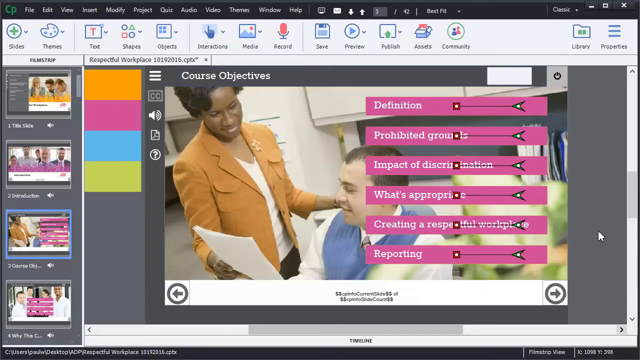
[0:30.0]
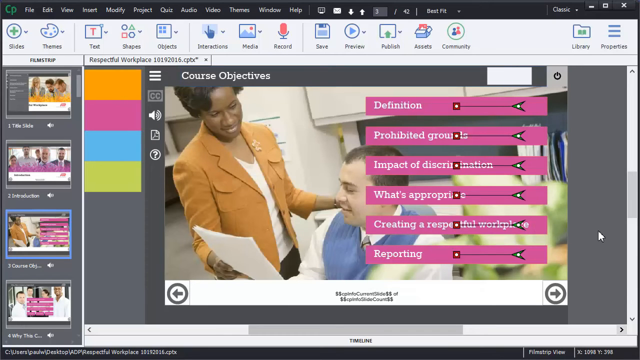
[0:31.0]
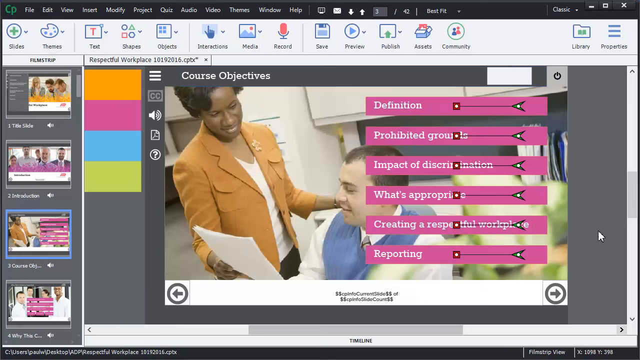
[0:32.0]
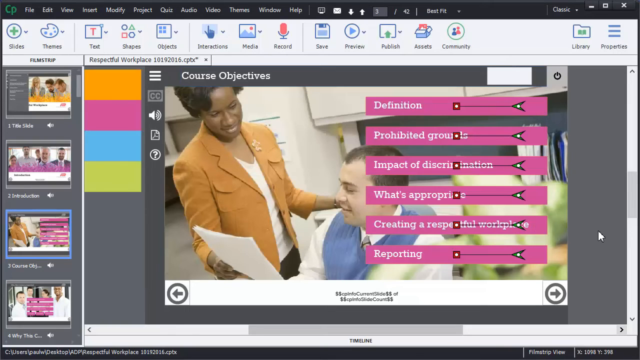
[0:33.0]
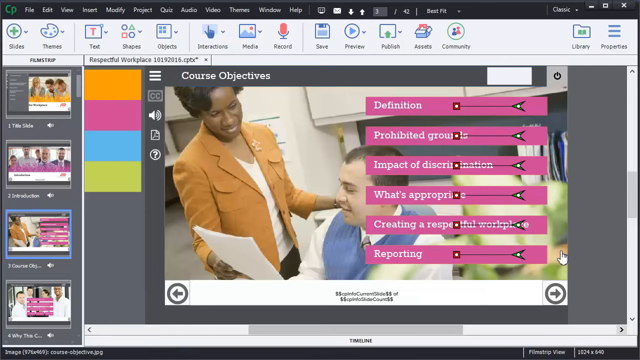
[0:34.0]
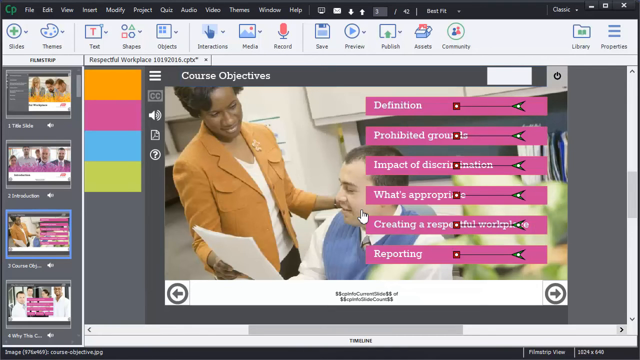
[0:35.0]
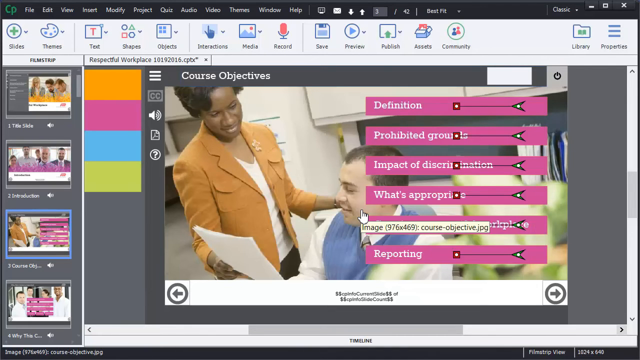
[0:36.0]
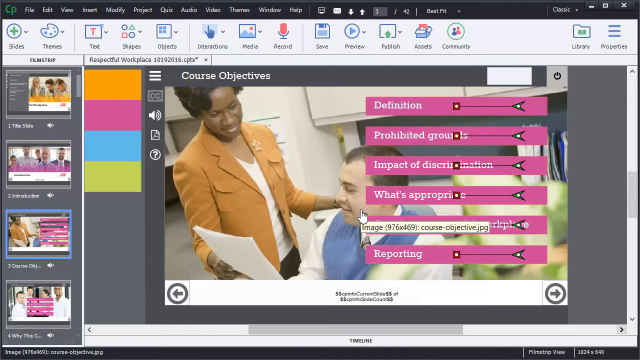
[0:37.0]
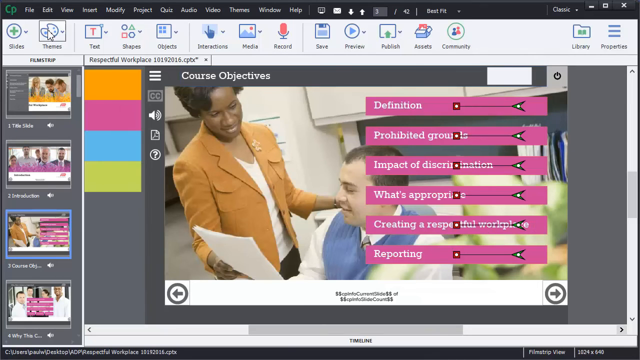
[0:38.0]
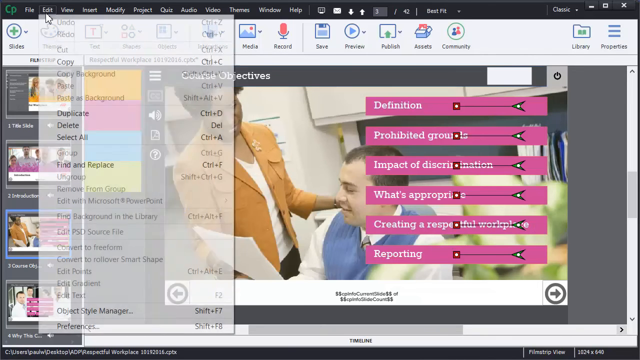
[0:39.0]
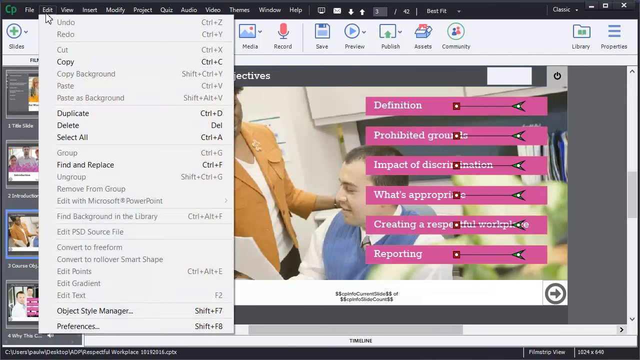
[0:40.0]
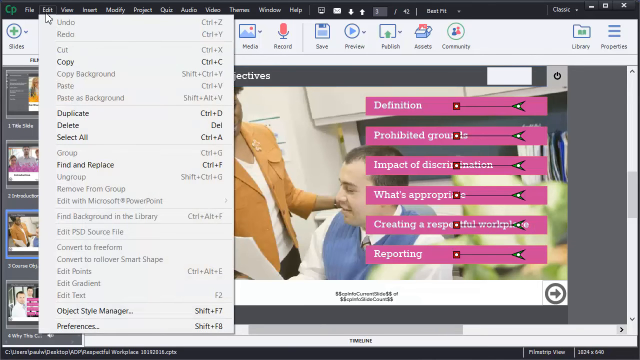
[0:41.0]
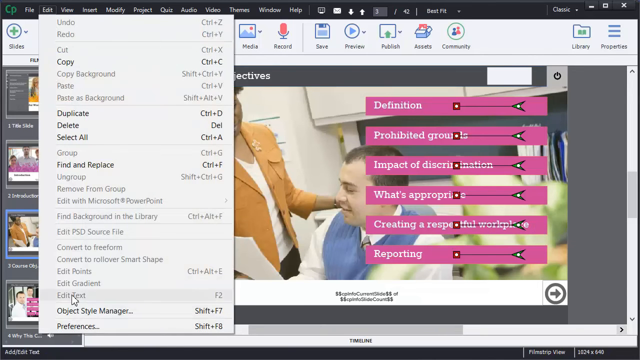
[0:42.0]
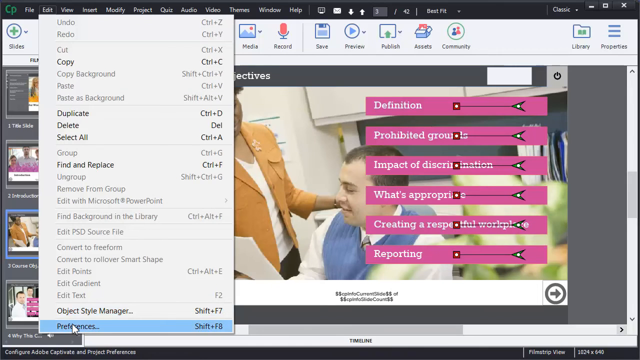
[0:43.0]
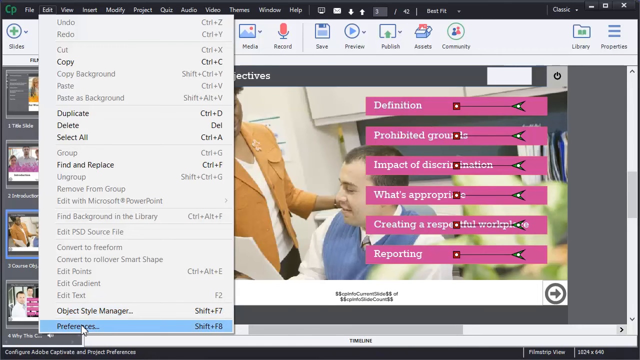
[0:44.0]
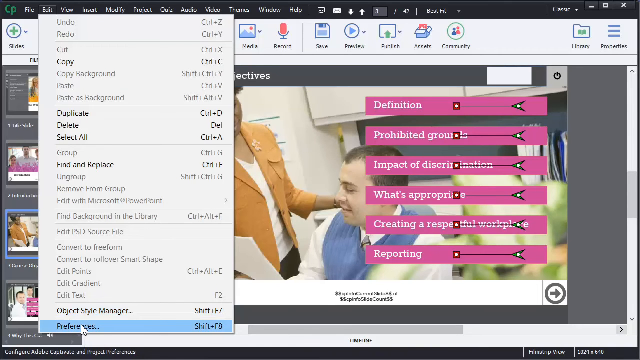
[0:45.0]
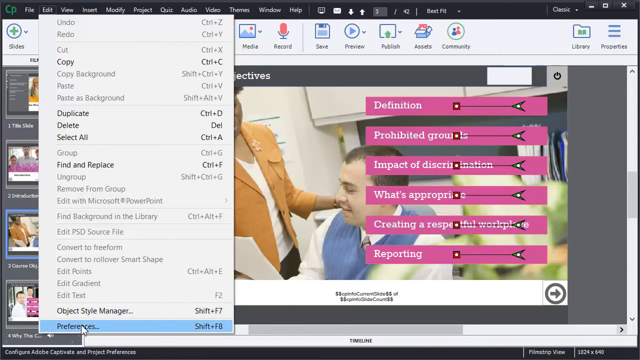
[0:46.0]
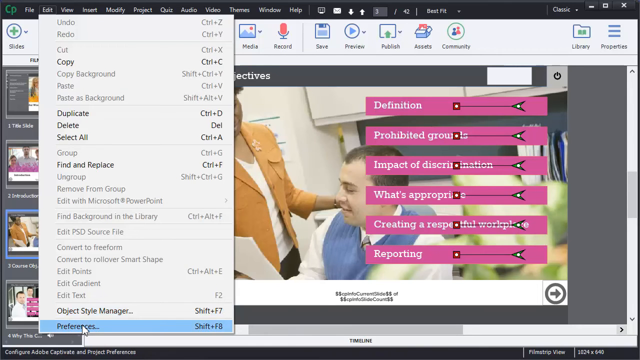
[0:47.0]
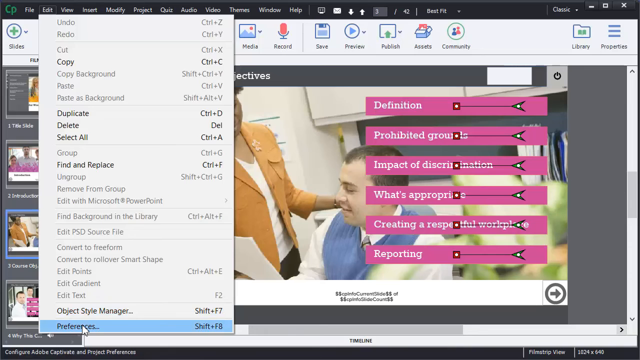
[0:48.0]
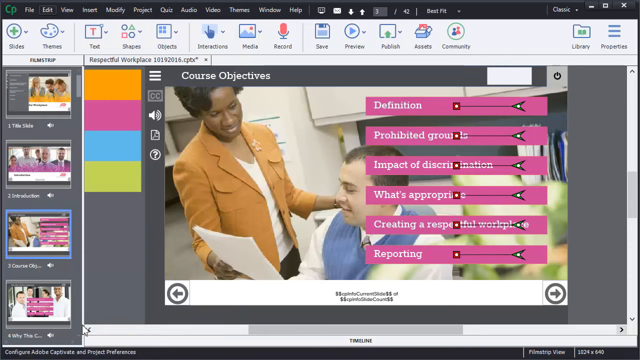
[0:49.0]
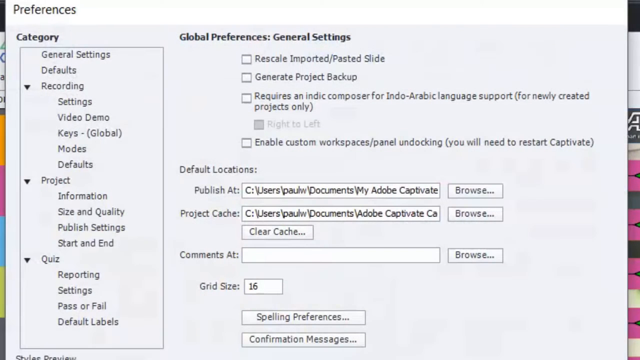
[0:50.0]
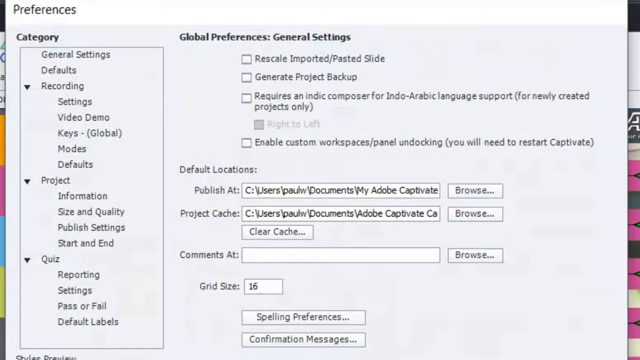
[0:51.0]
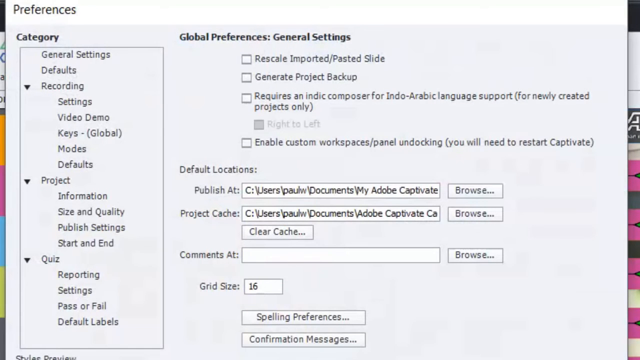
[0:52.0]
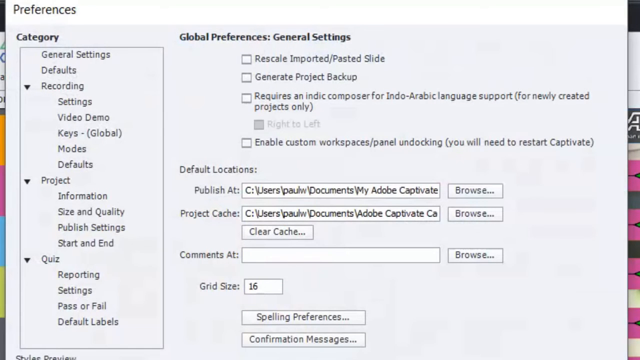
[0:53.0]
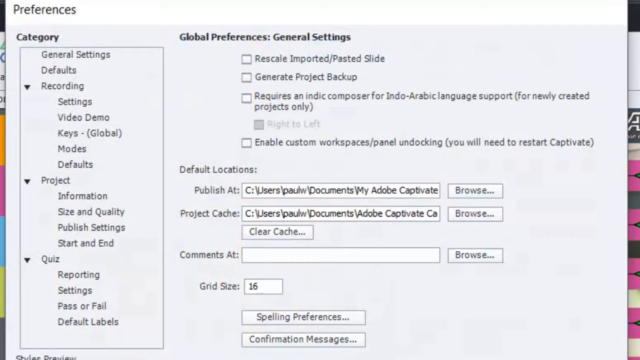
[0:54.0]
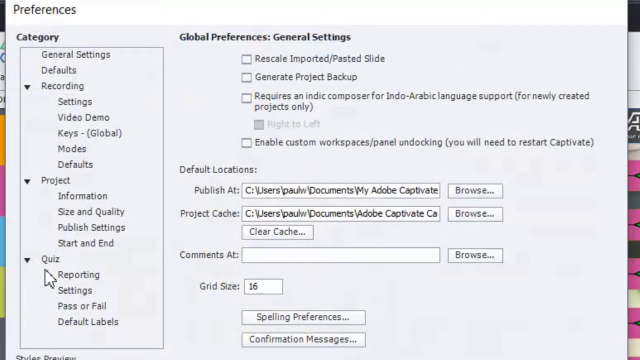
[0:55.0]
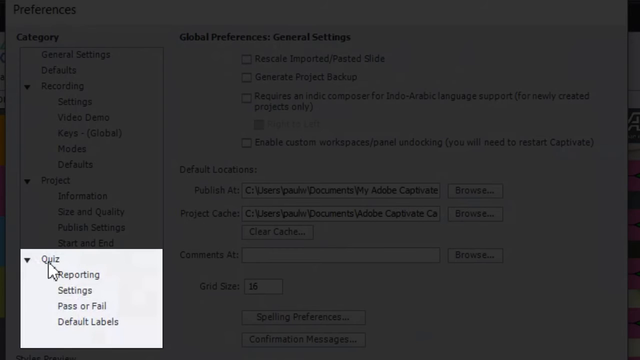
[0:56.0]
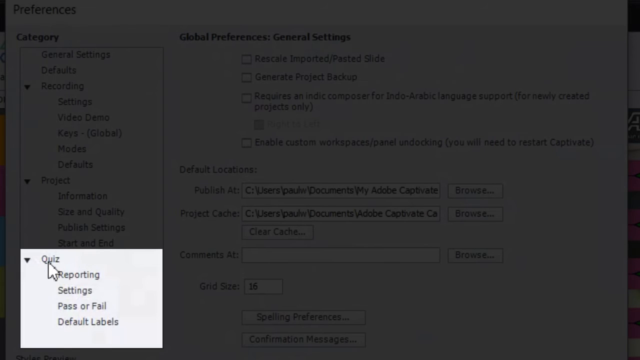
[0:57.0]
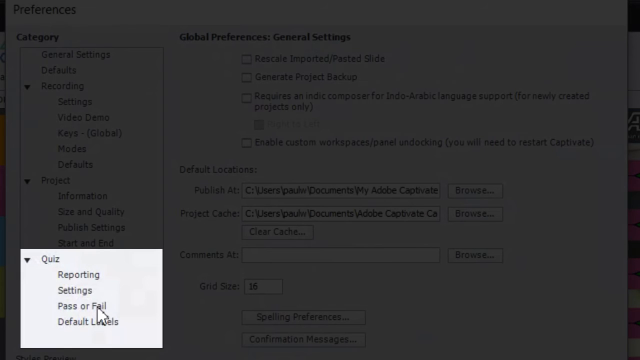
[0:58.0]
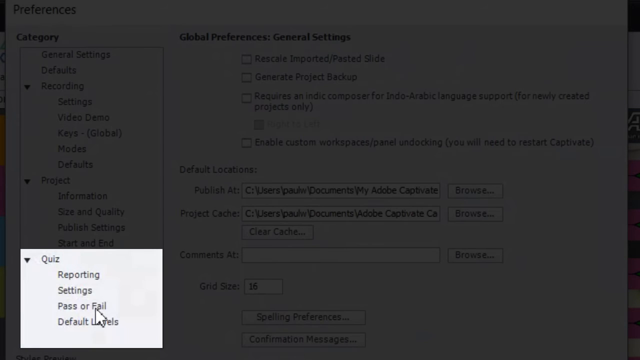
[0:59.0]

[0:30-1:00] The course objectives slide is clearly visible. The presenter hovers over some options, goes up to Edit on the top bar, and selects Preferences, which apparently has the SHIFT+F8 shortcut. The Preferences menu opens, with categories on the left side. A section with the subcategories "reporting settings" and "pass or fail" is highlighted, and the presenter clicks on the pass or fail option. Among the reporting settings, pass or fail and default labels are possibly visible. A CP logo in green appears in the top left corner, and the software seems to be part of the Adobe ecosystem.